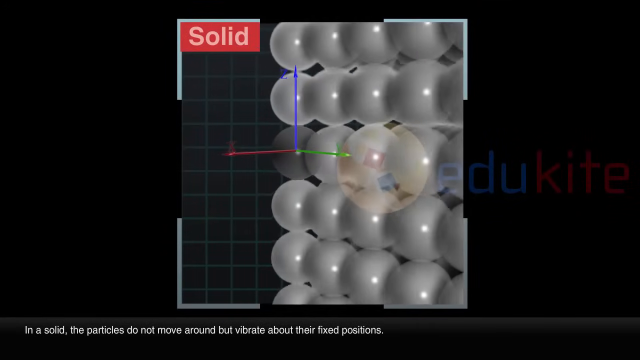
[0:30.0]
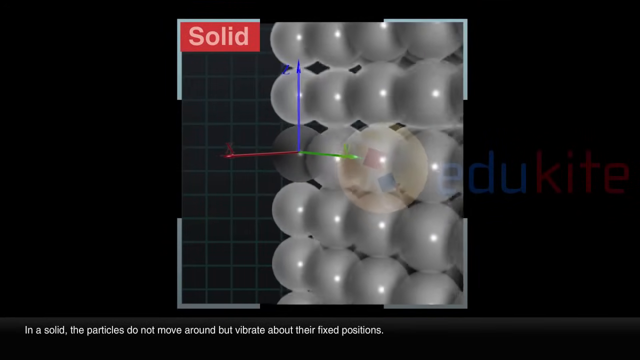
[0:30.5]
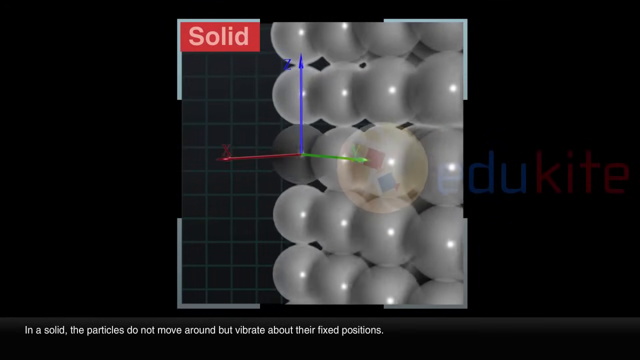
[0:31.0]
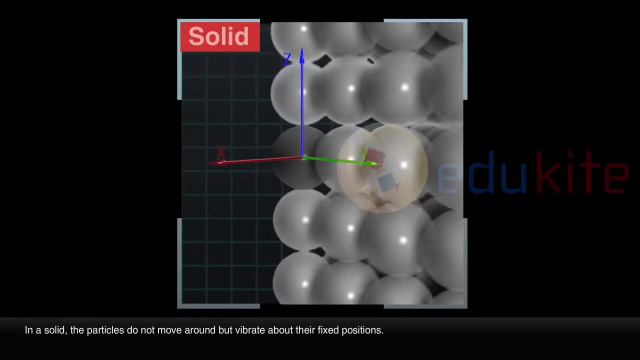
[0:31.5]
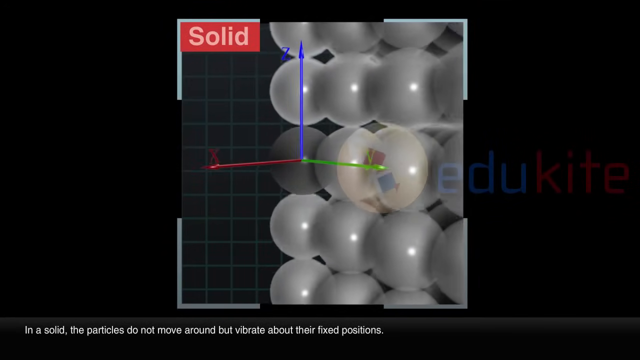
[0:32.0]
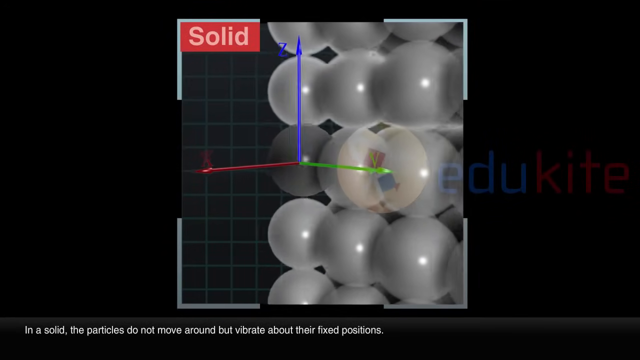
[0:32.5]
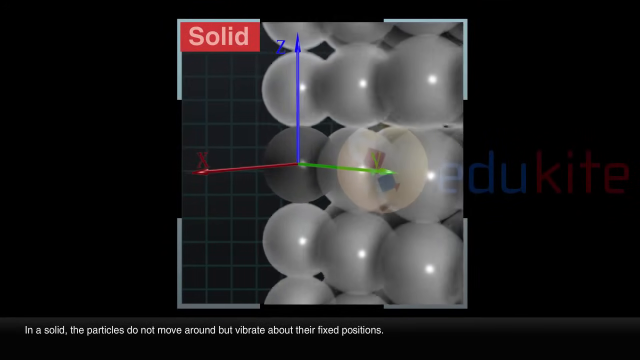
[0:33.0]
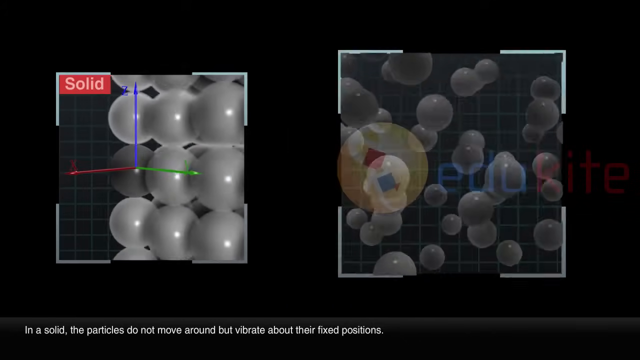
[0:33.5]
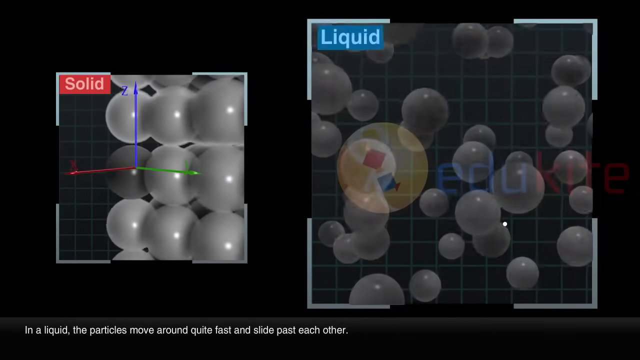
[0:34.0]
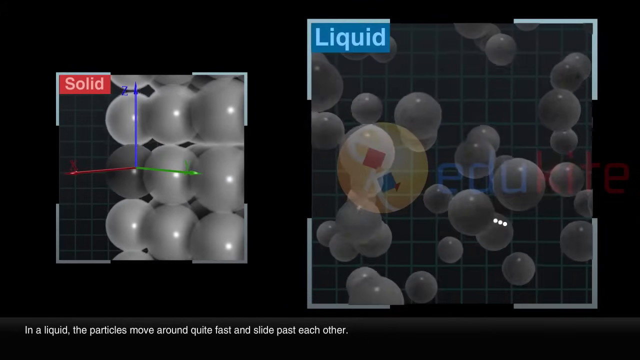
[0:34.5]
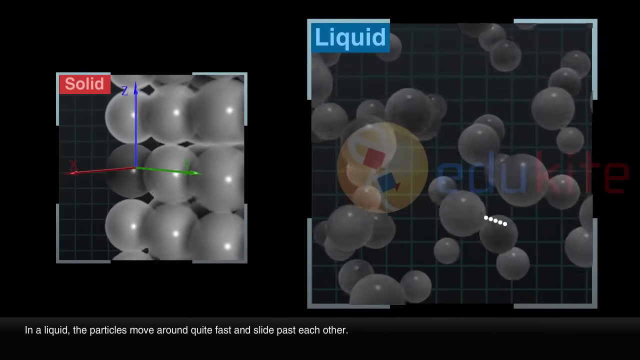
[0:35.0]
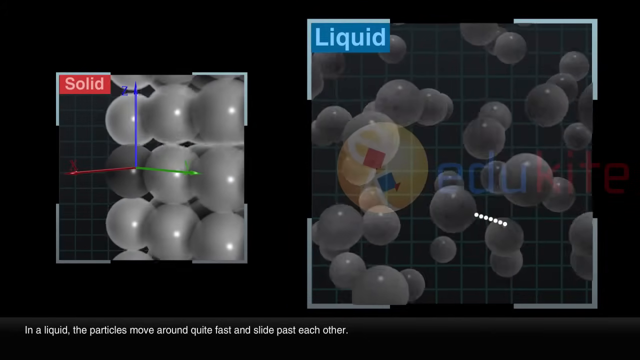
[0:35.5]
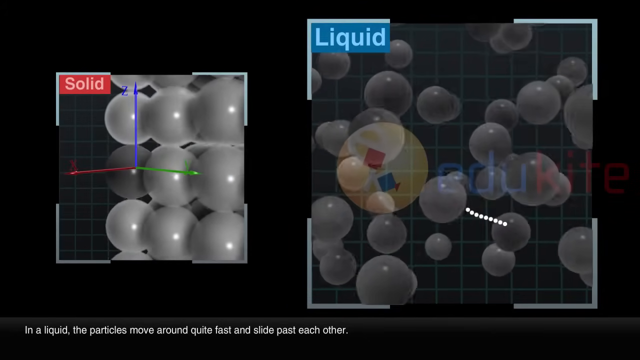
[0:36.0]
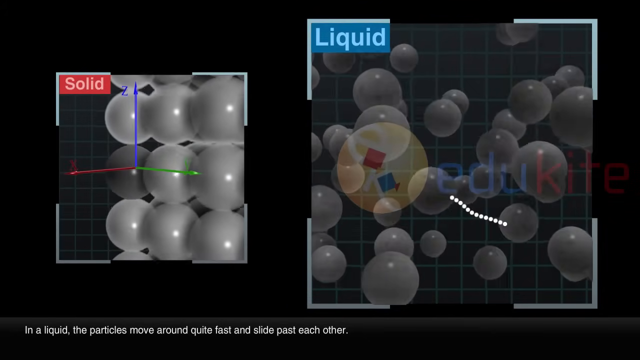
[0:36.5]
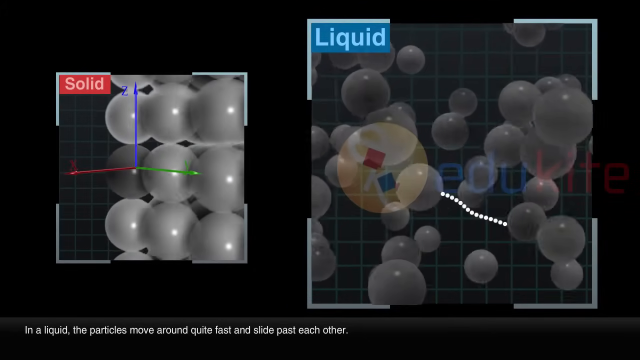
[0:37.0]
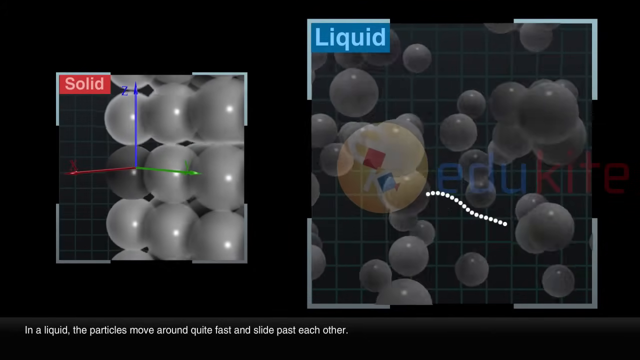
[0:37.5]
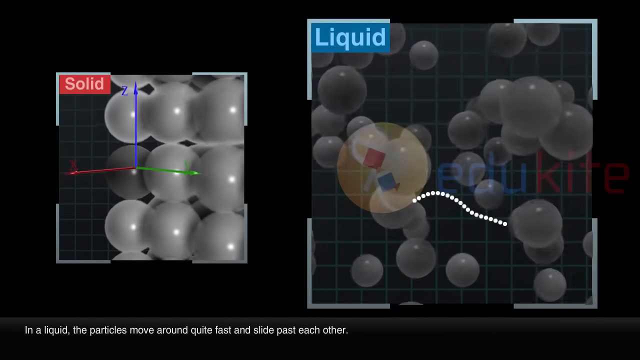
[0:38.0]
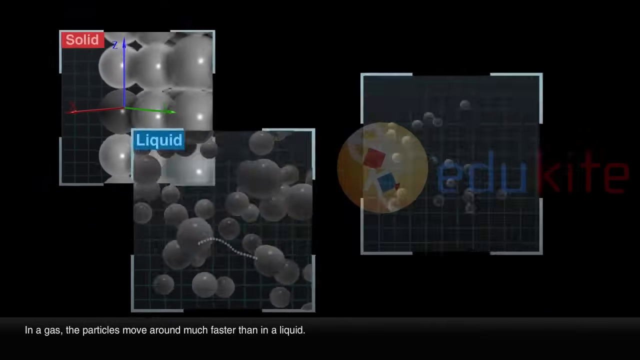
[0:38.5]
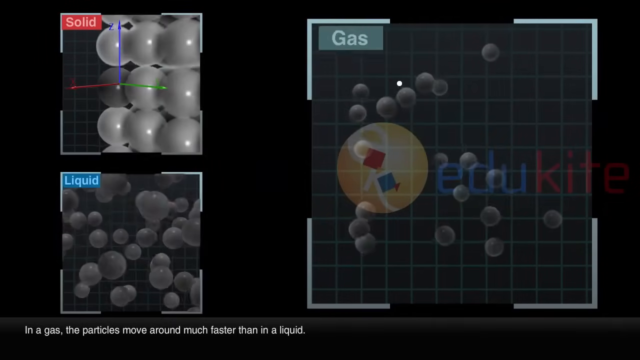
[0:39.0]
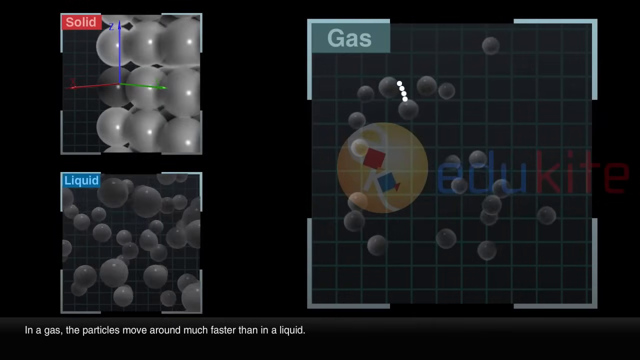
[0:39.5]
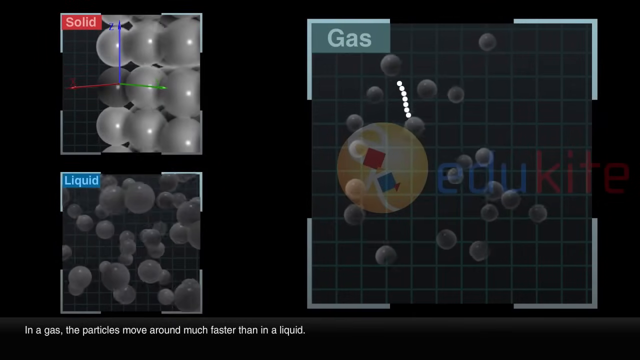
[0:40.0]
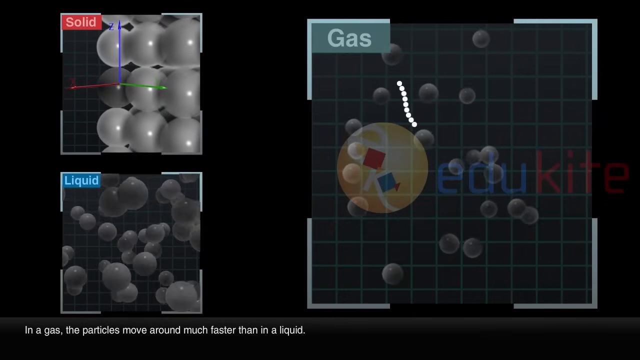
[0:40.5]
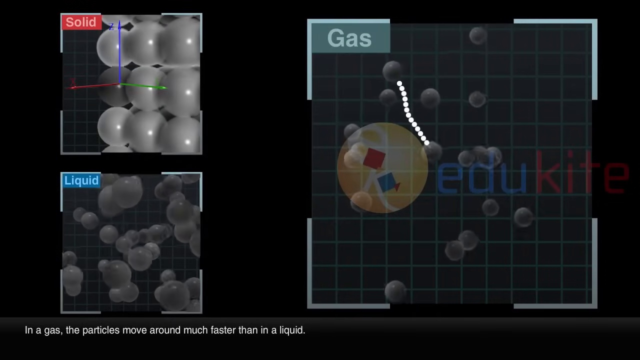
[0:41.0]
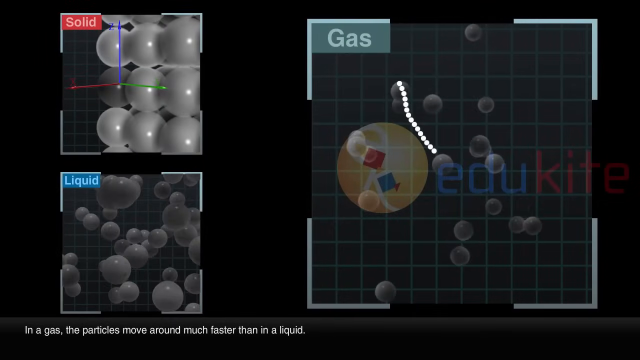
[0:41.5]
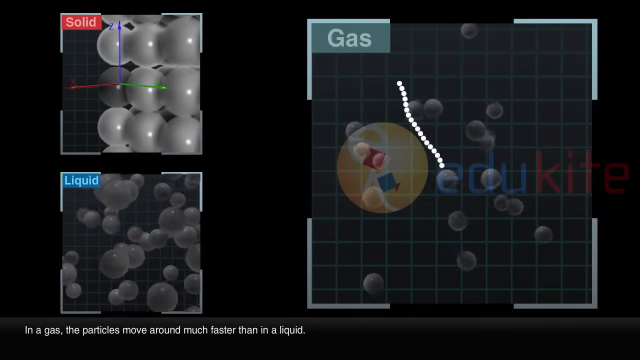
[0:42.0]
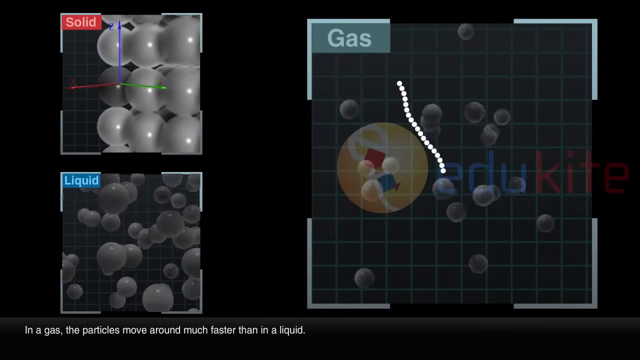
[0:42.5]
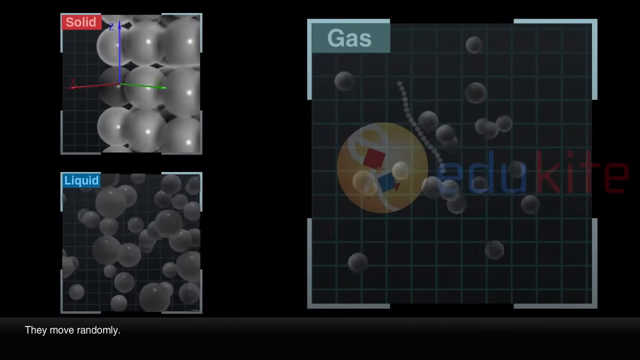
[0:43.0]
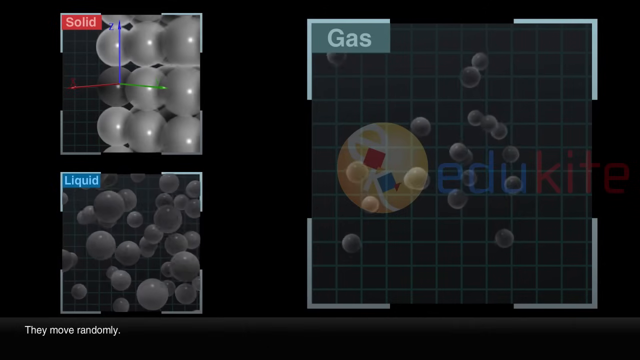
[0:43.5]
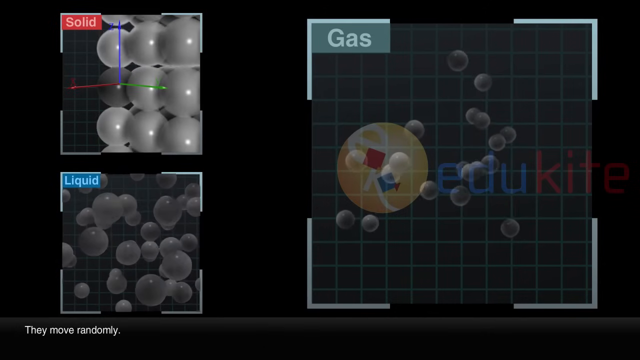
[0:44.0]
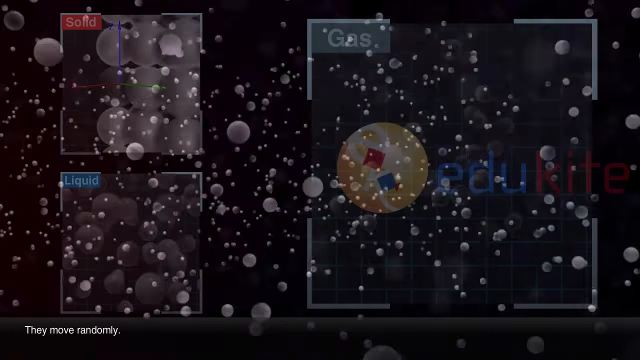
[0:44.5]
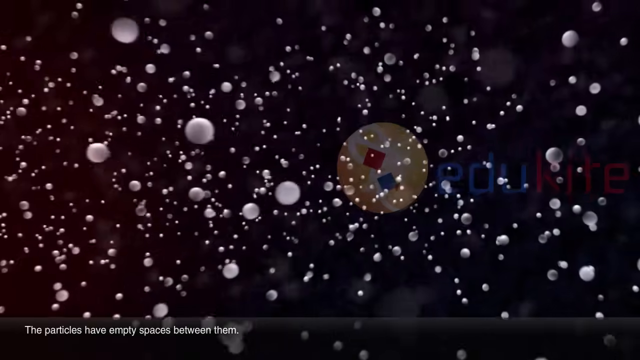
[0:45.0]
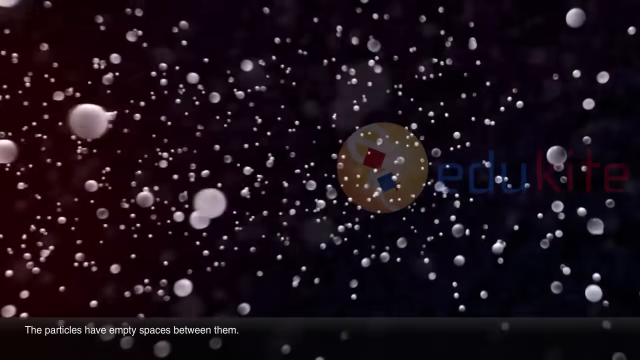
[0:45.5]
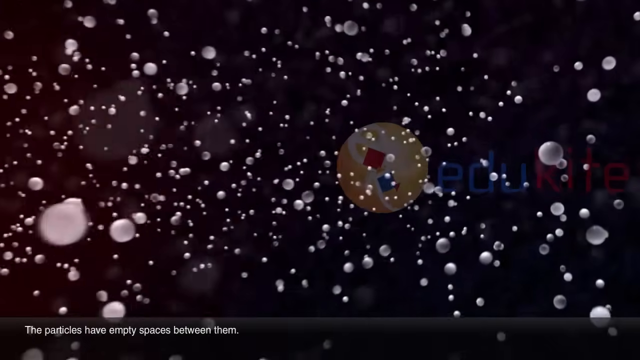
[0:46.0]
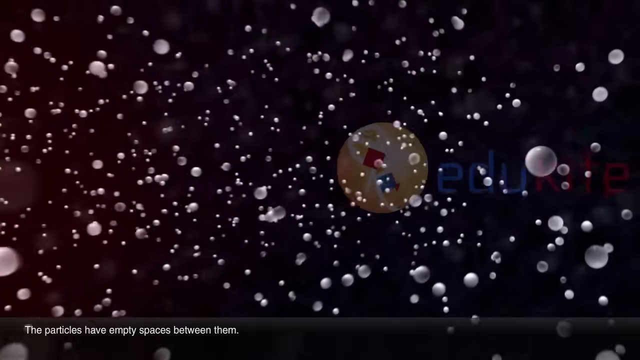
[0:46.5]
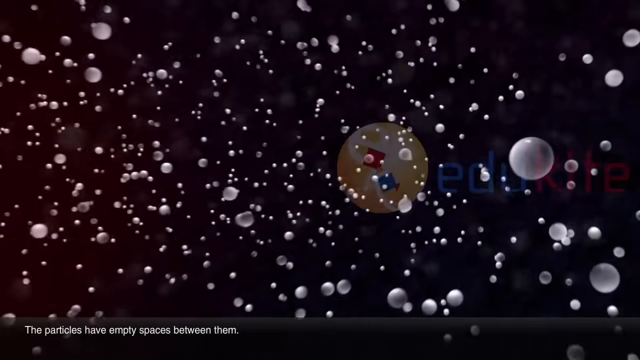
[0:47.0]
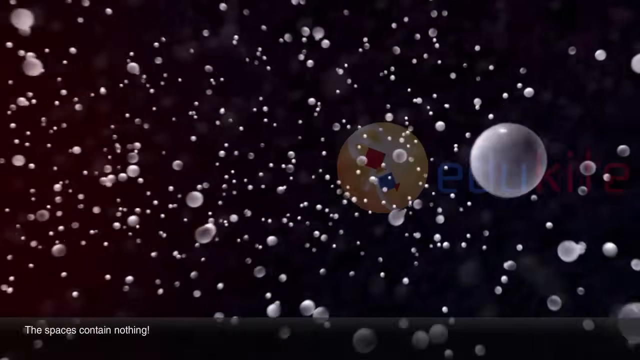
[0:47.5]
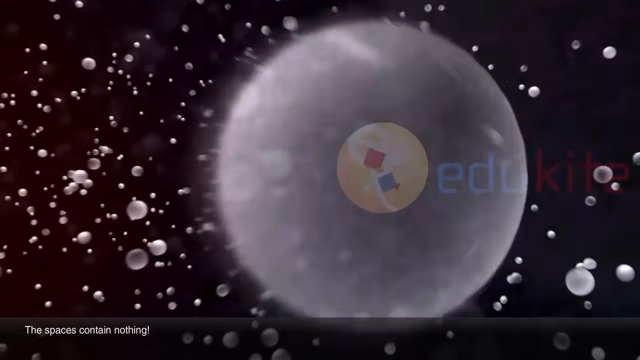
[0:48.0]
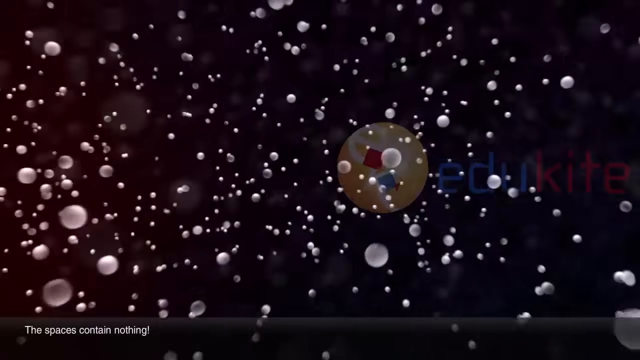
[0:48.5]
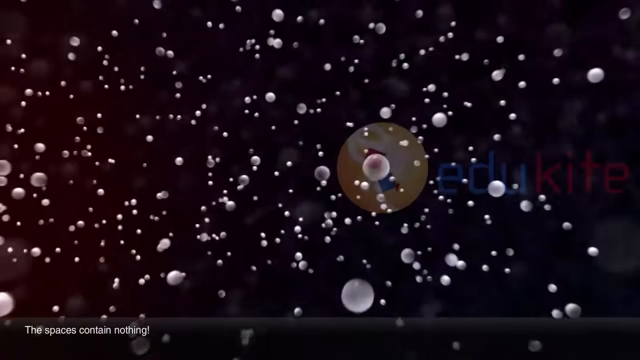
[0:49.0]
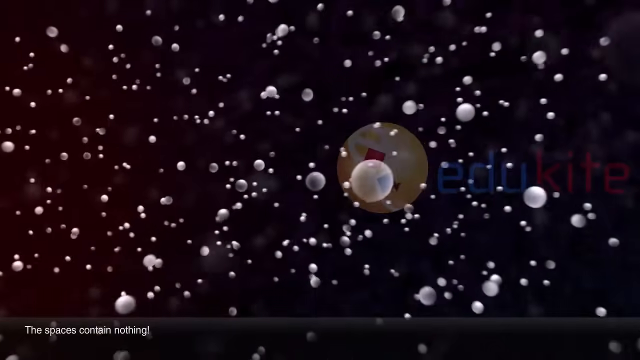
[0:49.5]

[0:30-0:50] On a black background, what looks like a square sits in the center with white text reading "solid" in a red rectangle at its top left. Inside the square is what looks like a lattice of around 20 to 30 white spheres, all vibrating in place. At the bottom, a gray transparent rectangular banner holds white text reading "in a solid, the particles do not move around, but vibrate about their fixed position." The view appears to zoom in on one of the spheres as it vibrates very fast in place inside the lattice. The square then becomes smaller and slides to the left, and a big square appears on the right with "liquid" in a blue rectangle at its top left. It looks like there are a lot of spheres, around 20, floating around freely. White text at the bottom reads "in a liquid, the particles move around quite fast and slide past each other." At the bottom middle, one sphere's path appears to be traced by many white dots trailing behind it; the line goes up and down, seemingly moving from right to left while rising and falling slightly. The solid square then moves to the top left and the liquid square to the bottom left, and another big square appears on the right with "gas" in a green rectangle at its top left. White text at the bottom reads "in a gas, the particles move around much faster than in a liquid." What looks like around 15 gray spheres bounce and move around freely. One sphere at the top left is traced with white dots along its path; it appears to go down toward the bottom right, bounce off another sphere and bounce back up toward the top left. The video then transitions to what looks like a black background with many white spheres all around, apparently moving downward toward the bottom left, or with the view moving toward them and the top right. White text at the bottom reads "the particles have empty spaces between them. The spaces contain nothing."